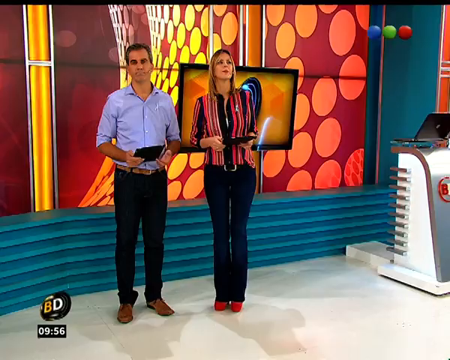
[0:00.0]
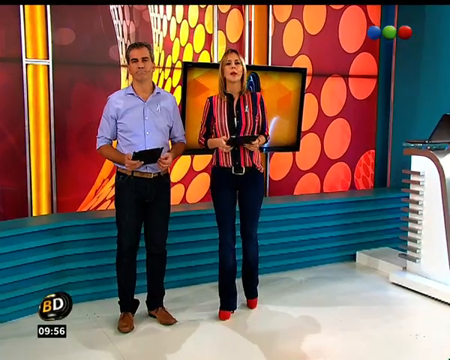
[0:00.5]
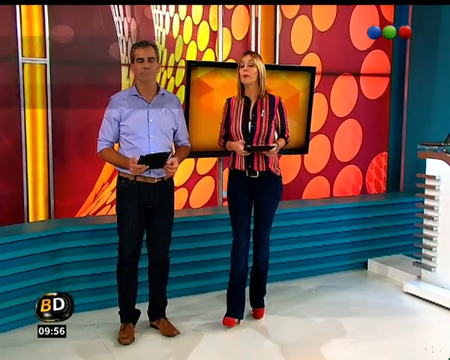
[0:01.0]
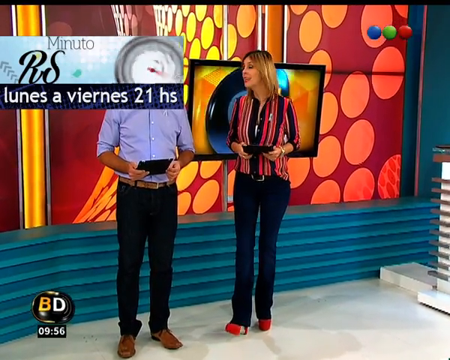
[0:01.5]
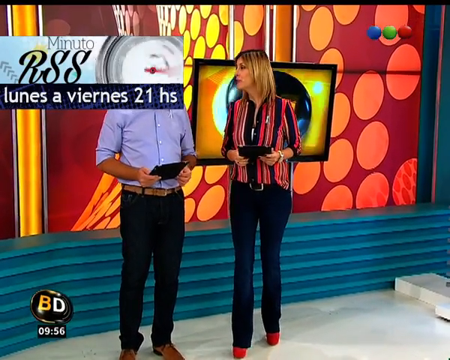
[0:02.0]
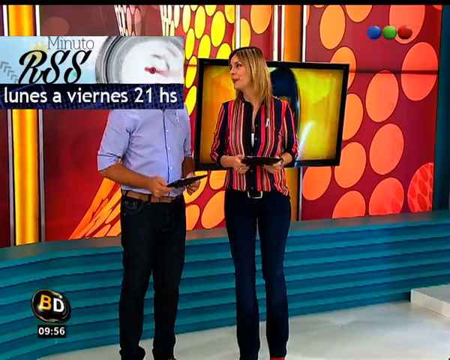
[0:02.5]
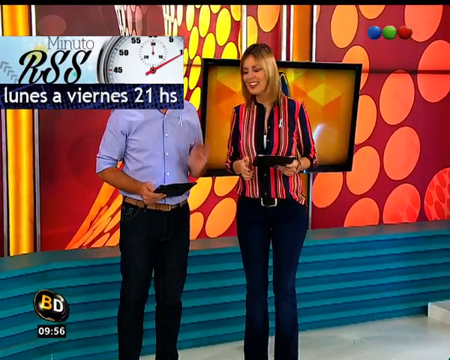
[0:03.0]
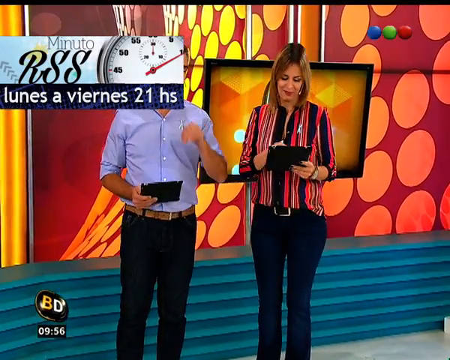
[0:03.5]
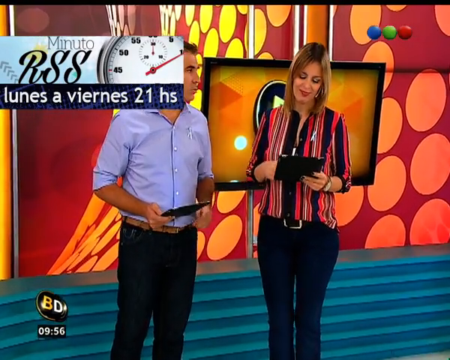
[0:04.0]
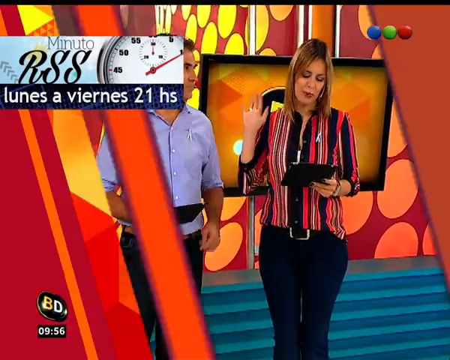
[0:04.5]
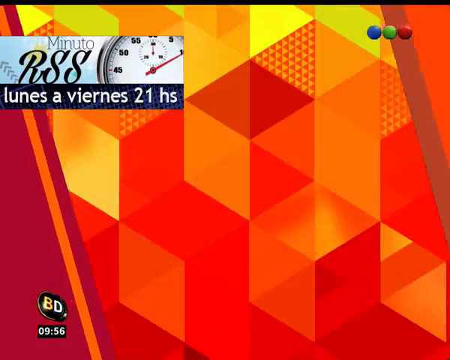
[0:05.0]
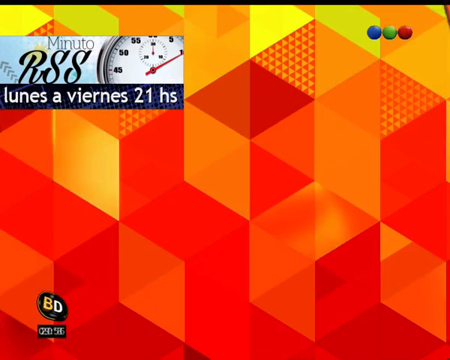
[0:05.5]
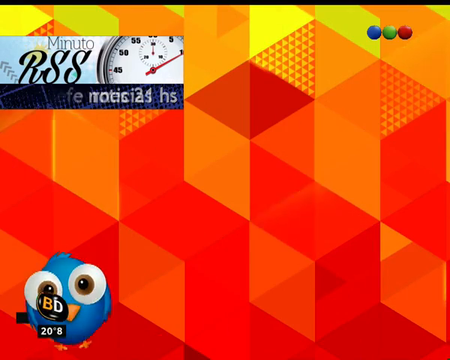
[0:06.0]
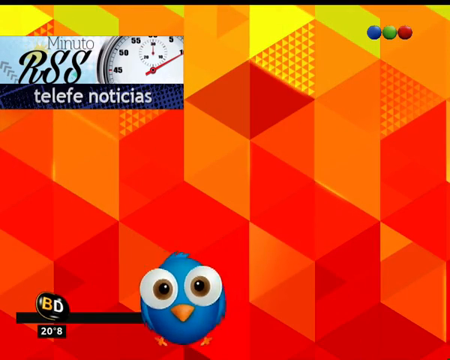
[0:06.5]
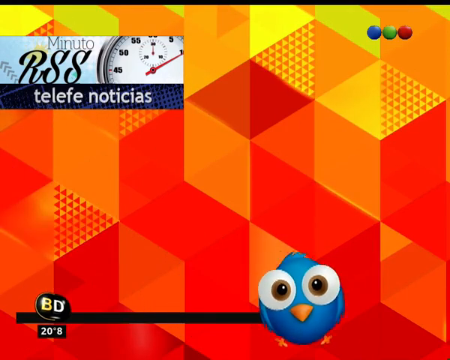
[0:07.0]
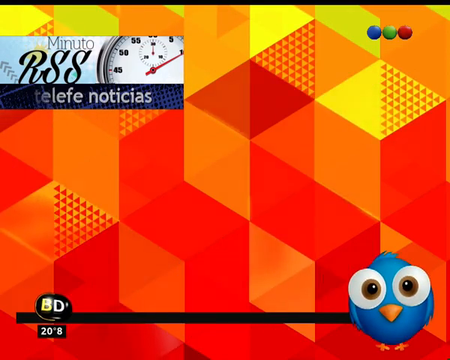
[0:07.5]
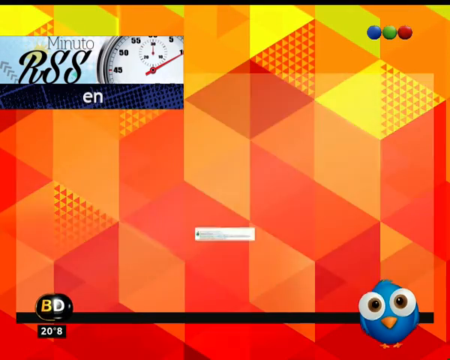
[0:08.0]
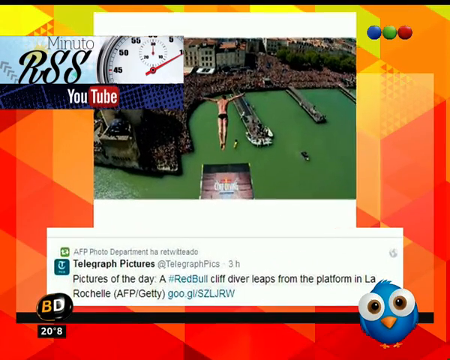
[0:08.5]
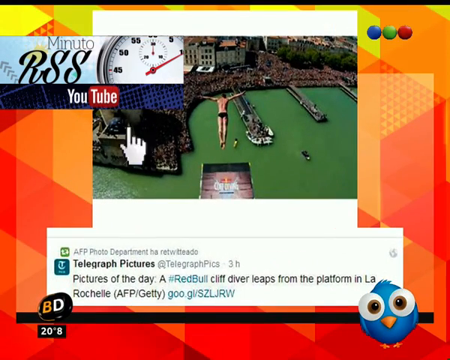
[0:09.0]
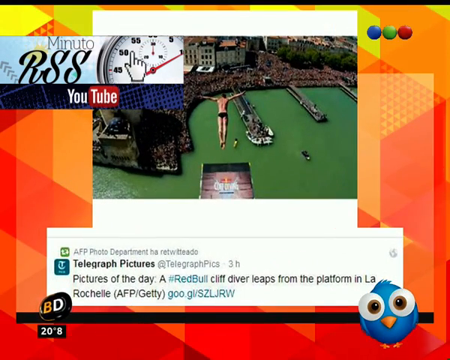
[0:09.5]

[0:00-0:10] Two people, a man and a woman, appear. The man wears a blue button-down shirt, blue jeans and brown shoes and holds a tablet in his hand. The woman wears red shoes, blue jeans and a striped shirt and also holds a tablet. Behind them is a TV screen, and there is a red screen with yellow dots. There are blue stairs. The two are talking. Text reads "Minuto RSS, Lune Avernes, 21 hours." A little blue bird then goes across the bottom of the screen. Text follows that includes "telegraph pictures, telegraph pics, three hours, pictures of the day, #Red Bull Cliff Diver, leaps from the platform in LA Rochelle, AFP Getty," and then "goo.gl/SZLJRW." The view returns to the two people on the stage. At the bottom is "BD," with the B in gold and the D in white, and the two are shown talking. To the right are three dots: blue, green and red. Then a person diving is shown.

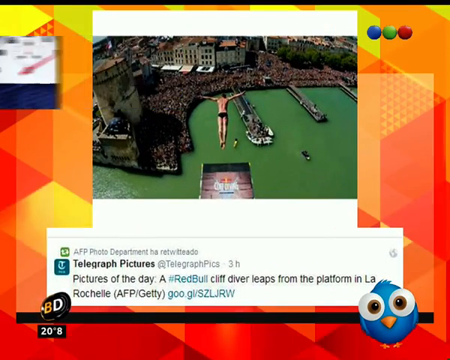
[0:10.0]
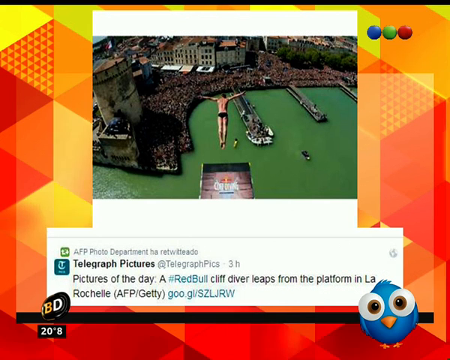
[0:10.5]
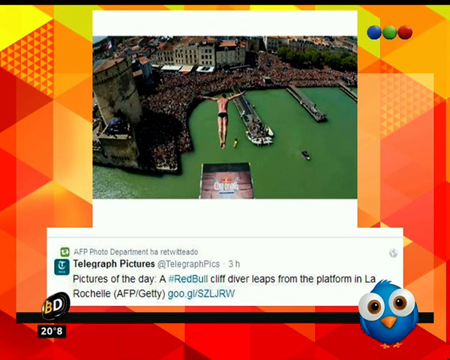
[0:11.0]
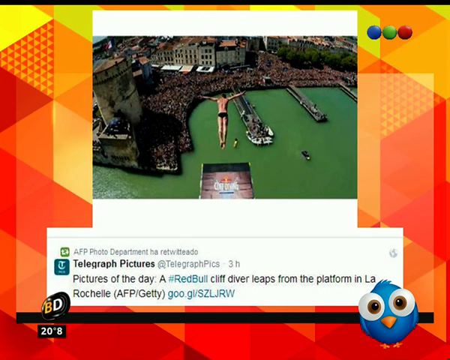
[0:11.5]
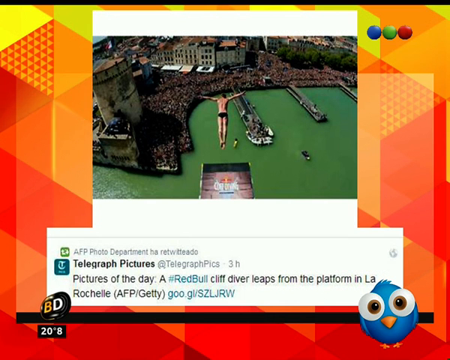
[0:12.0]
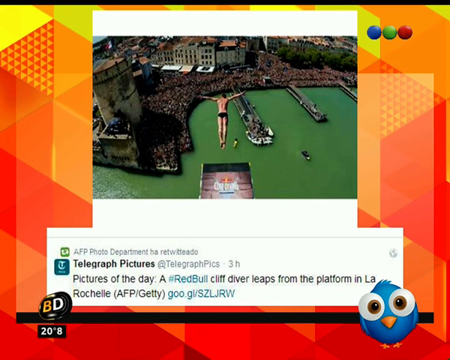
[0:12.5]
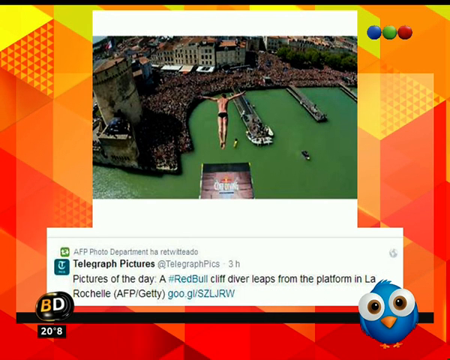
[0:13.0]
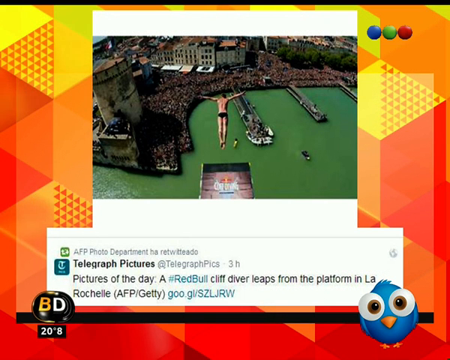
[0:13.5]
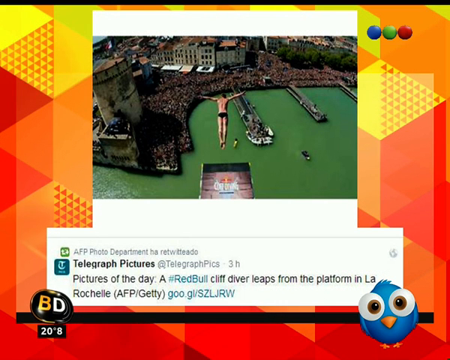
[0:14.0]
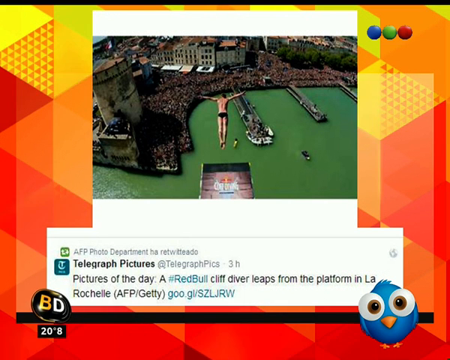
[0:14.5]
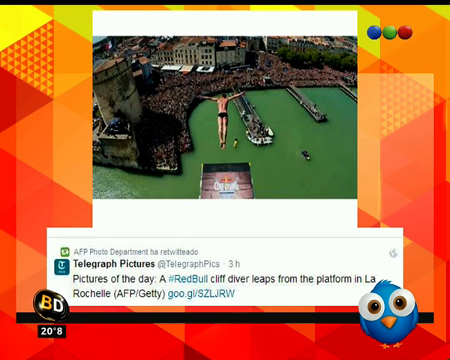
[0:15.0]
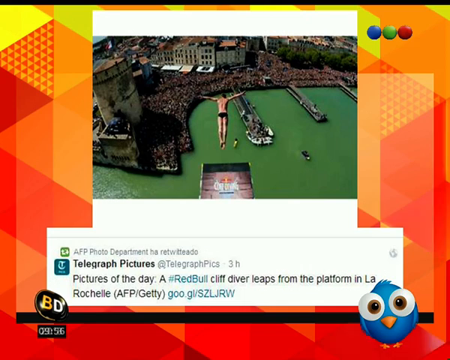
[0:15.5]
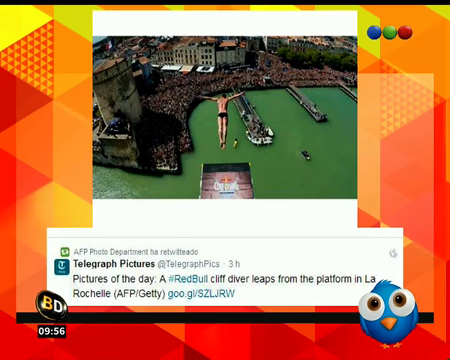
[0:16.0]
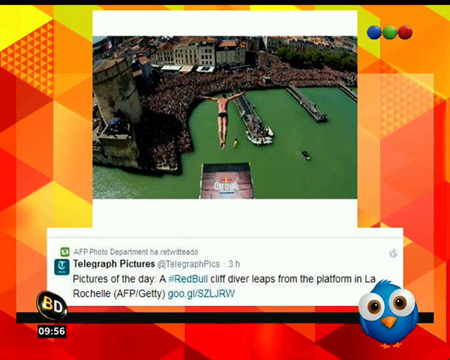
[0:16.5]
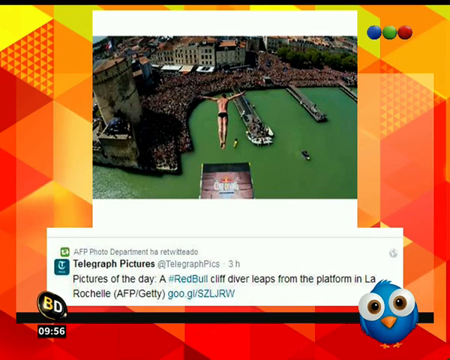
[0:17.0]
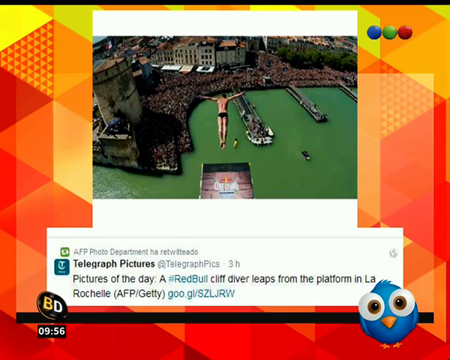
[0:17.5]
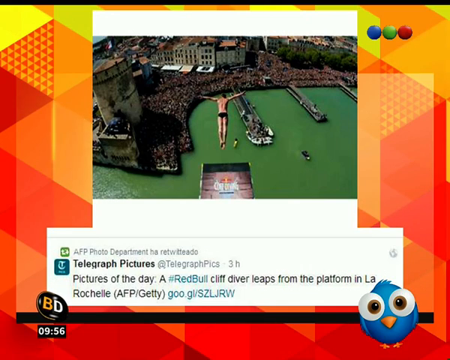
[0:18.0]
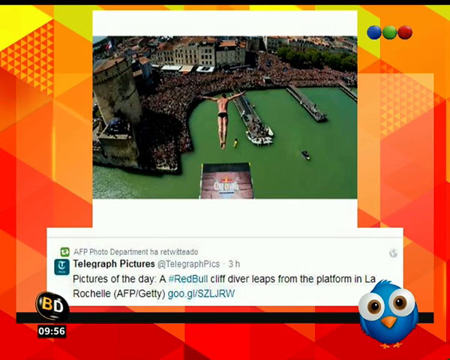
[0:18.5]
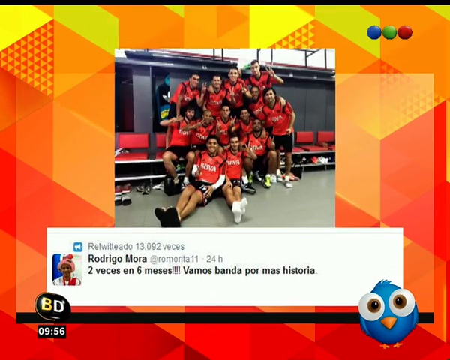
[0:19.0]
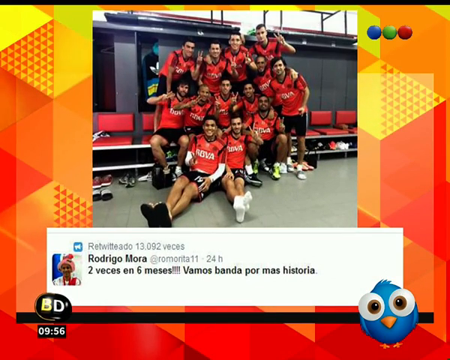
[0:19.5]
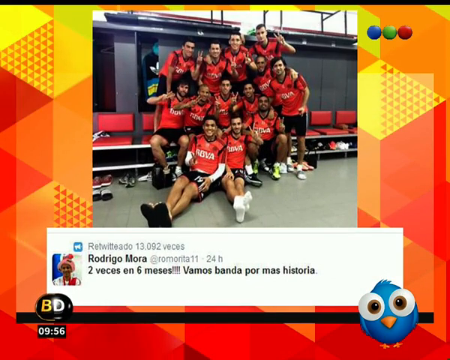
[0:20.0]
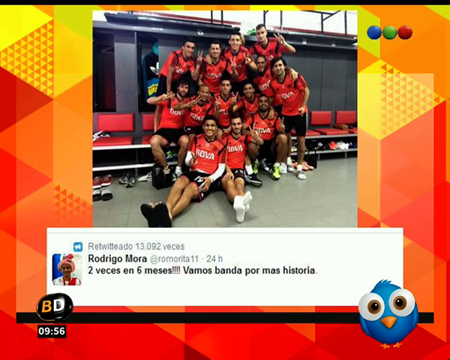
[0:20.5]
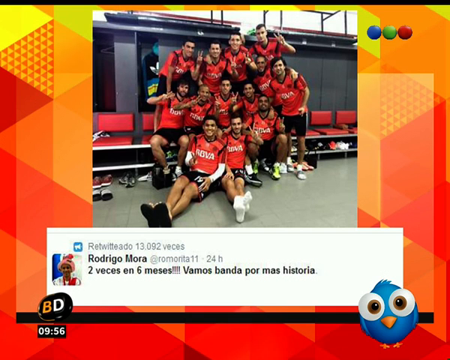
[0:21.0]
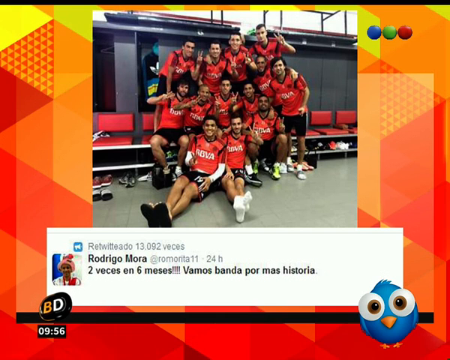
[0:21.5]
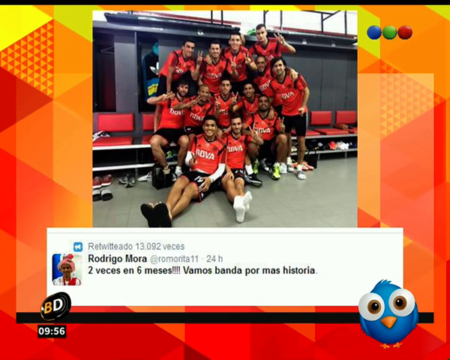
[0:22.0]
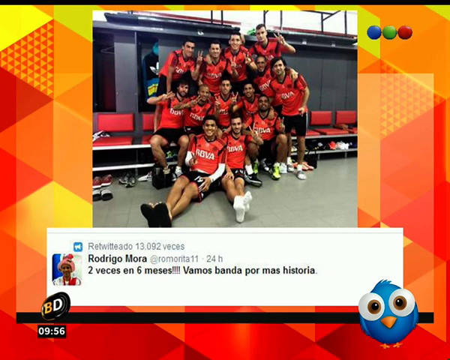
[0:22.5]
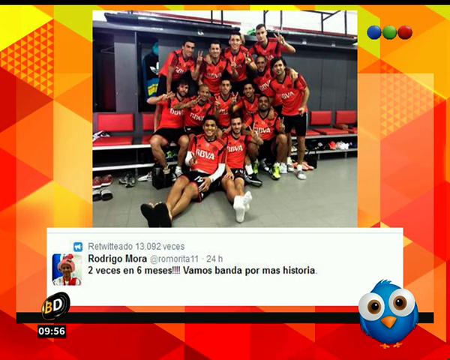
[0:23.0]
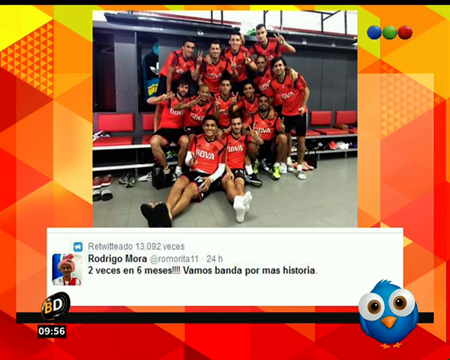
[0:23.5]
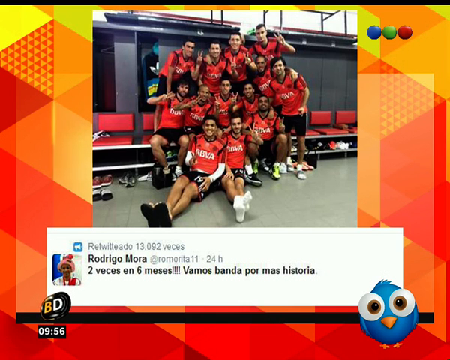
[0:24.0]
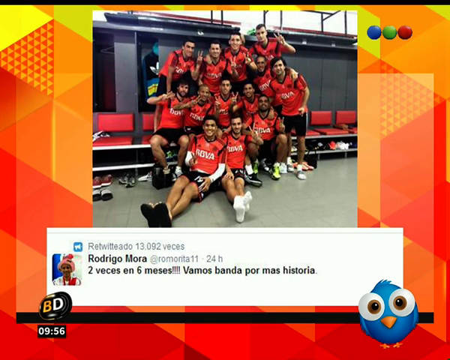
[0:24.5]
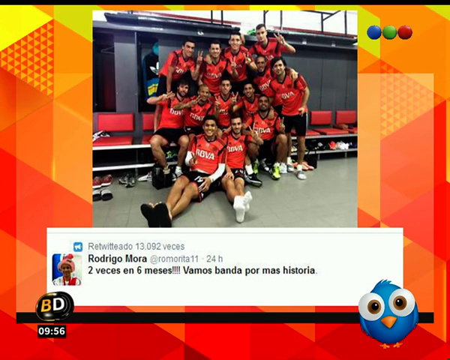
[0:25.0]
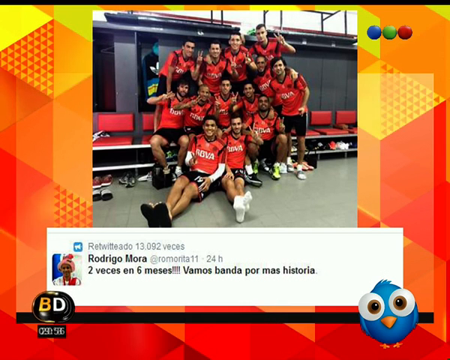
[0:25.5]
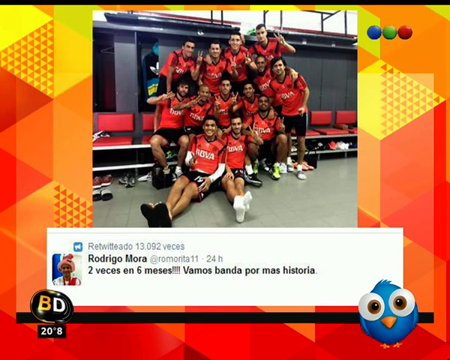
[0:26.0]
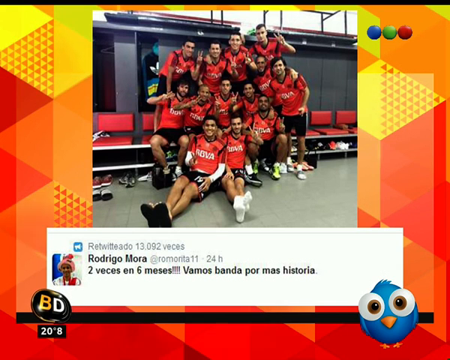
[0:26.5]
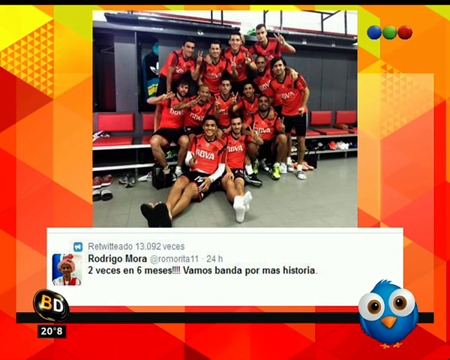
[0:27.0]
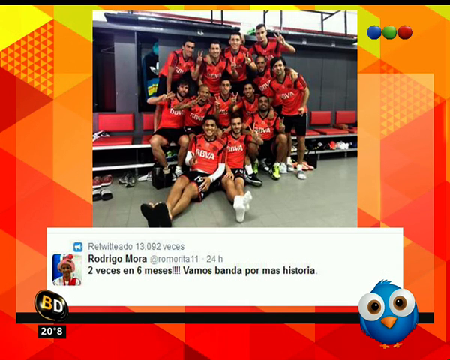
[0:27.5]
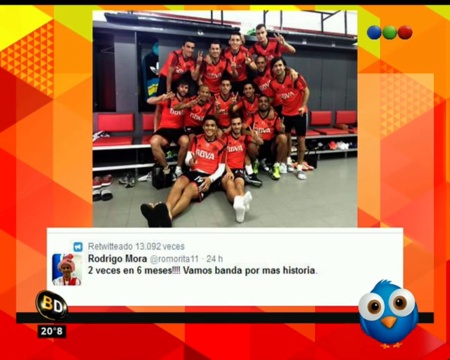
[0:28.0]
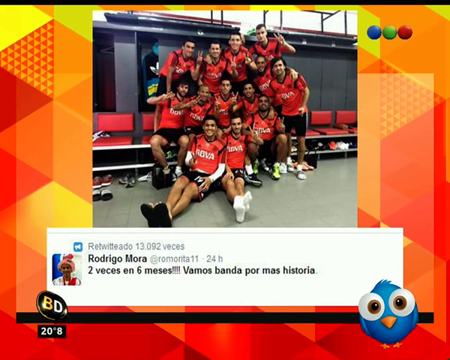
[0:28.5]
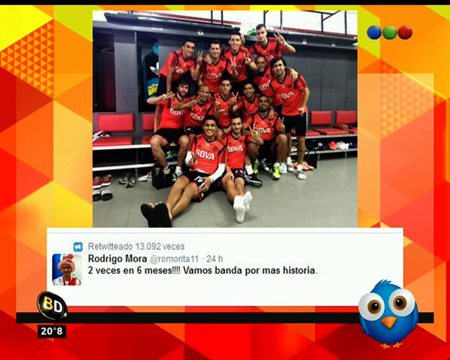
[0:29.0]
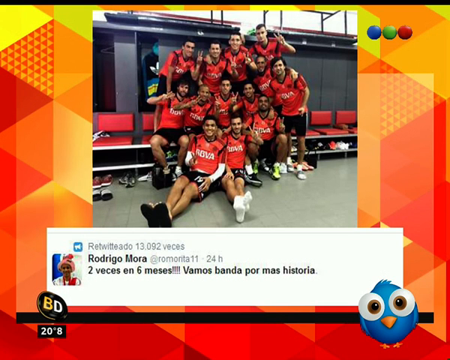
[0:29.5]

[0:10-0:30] Against a yellow background, a person wearing a black bathing suit dives into the water. The water is green, lots of people are there watching, and buildings are visible all around. A person in the water wears a yellow top, and there is a little boat. Text reads "picture of the day, #Red Bull cliff diver leaps from the platform in LA Rochelle," then "AFP/Getty," and then "goo.gl/SZLJRW." A blue bird with big white eyes with brown on the inside appears, and "BD" is on the left. Next, a bunch of people sit down, posing for a picture. There are red chairs and sneakers are visible. They wear red and black uniforms, and the shirts say "ROVA" on the front in white lettering. Text reads "13,092 Rodrigo Mora at Romanta 11," posted 24 hours ago. The bird appears toward the lower right, with the BD logo on the bottom. The view then returns to the man diving into the very green water, with buildings and people sitting and watching.